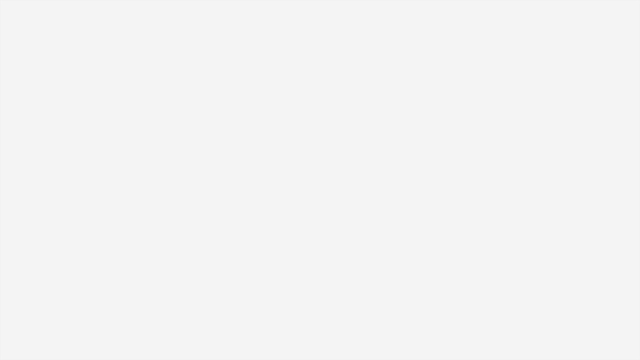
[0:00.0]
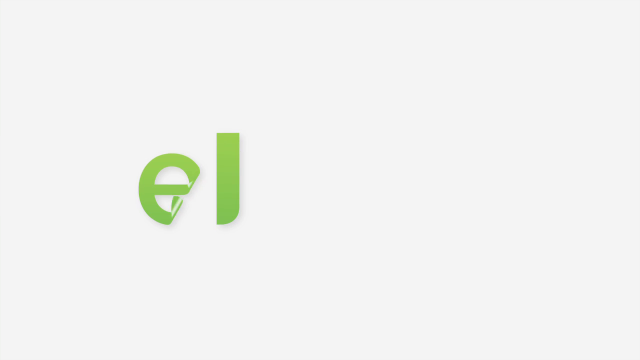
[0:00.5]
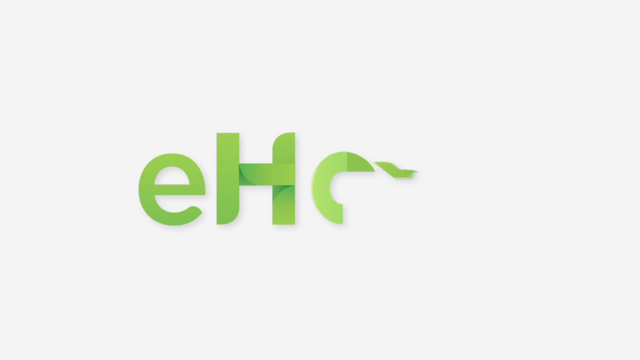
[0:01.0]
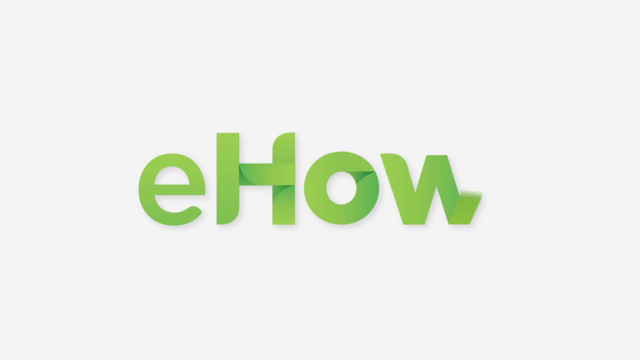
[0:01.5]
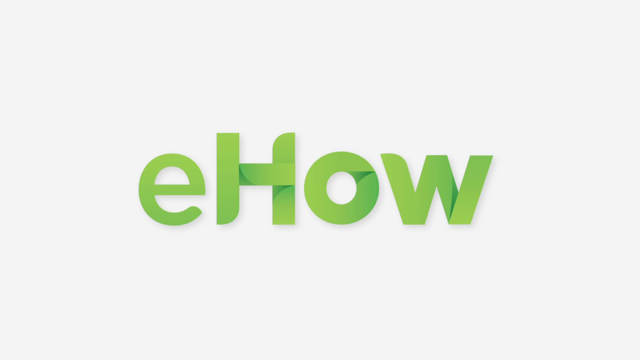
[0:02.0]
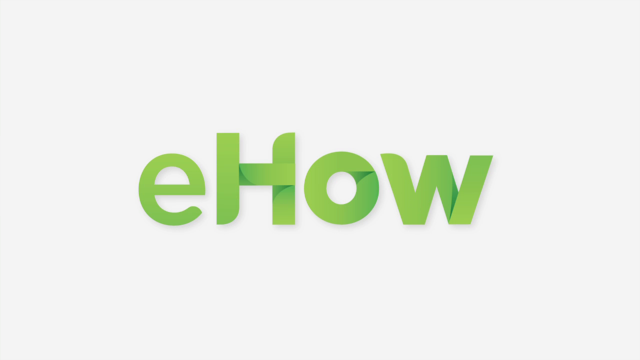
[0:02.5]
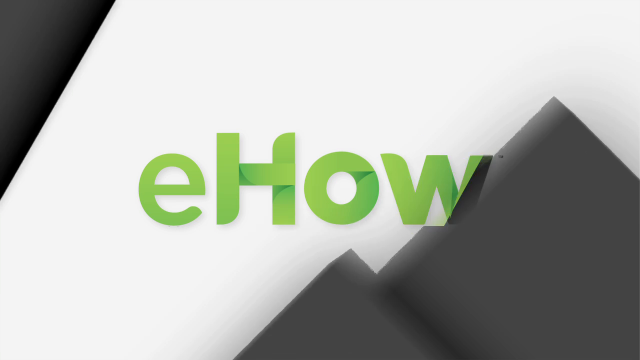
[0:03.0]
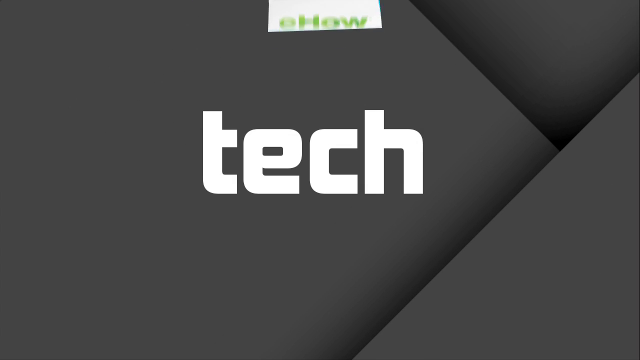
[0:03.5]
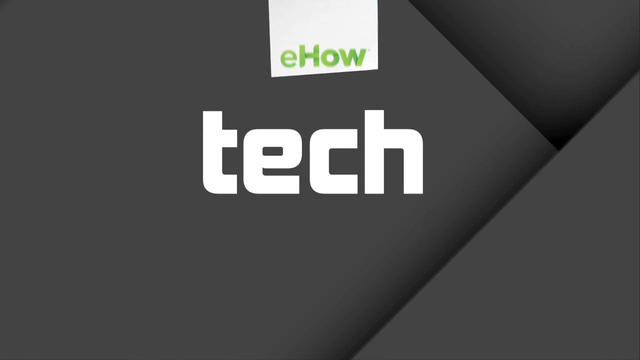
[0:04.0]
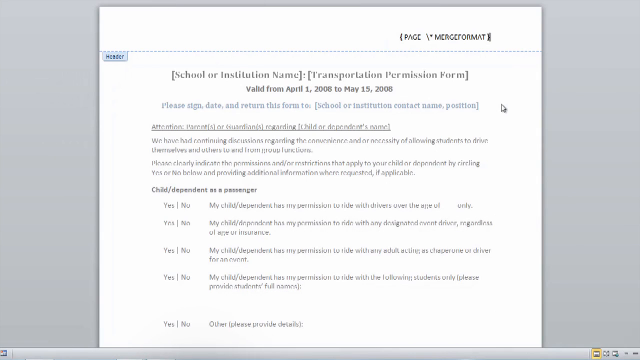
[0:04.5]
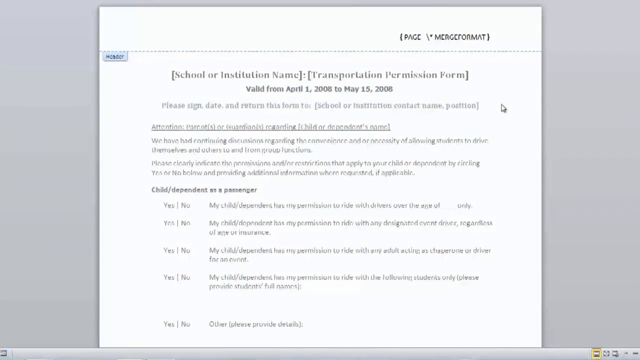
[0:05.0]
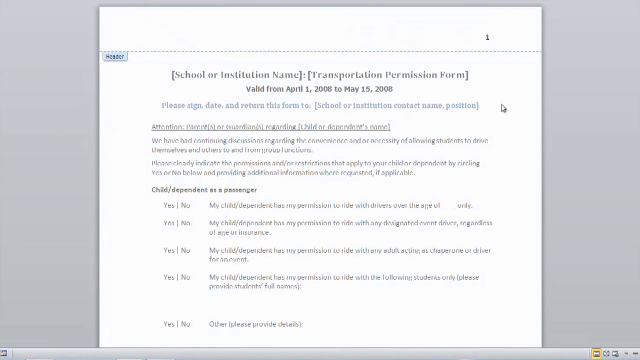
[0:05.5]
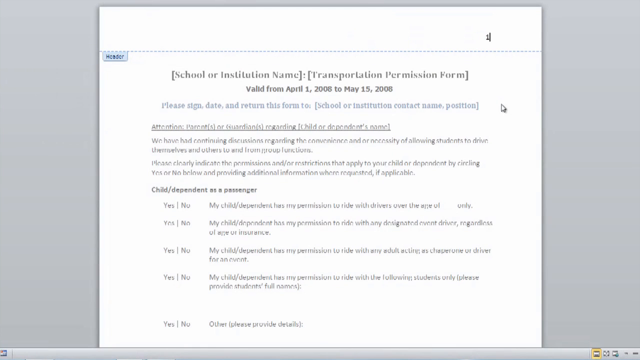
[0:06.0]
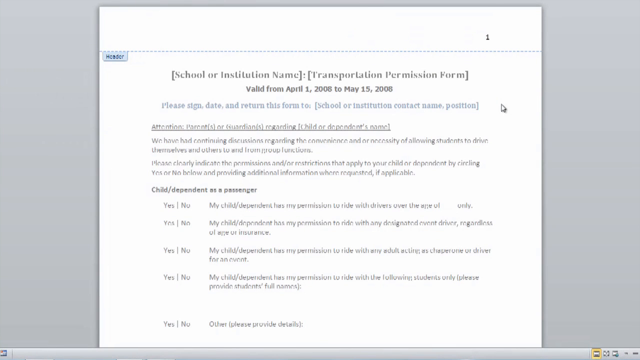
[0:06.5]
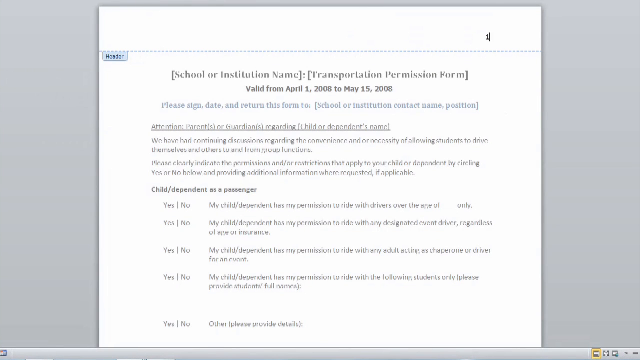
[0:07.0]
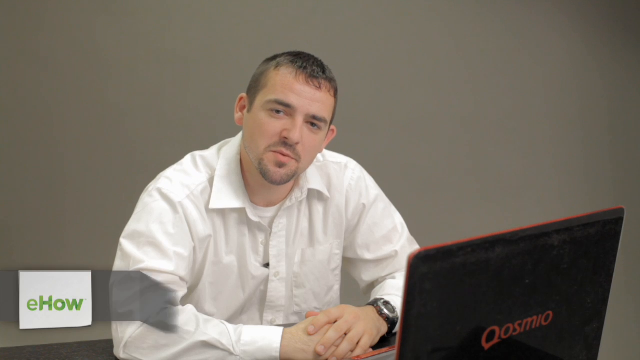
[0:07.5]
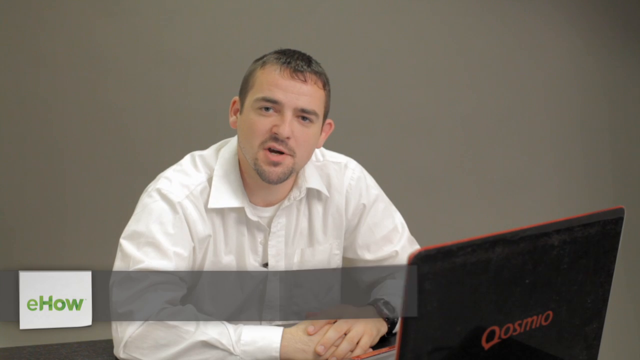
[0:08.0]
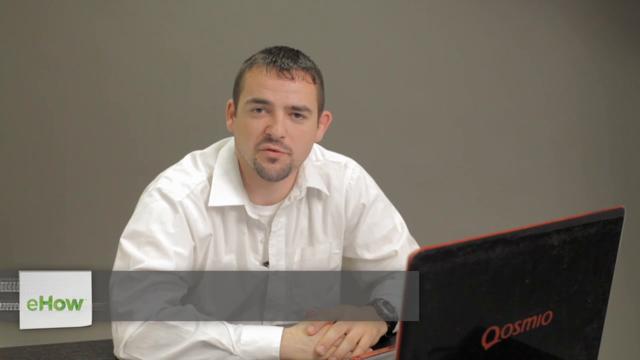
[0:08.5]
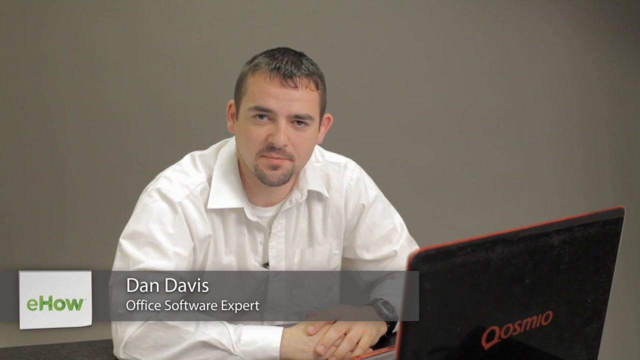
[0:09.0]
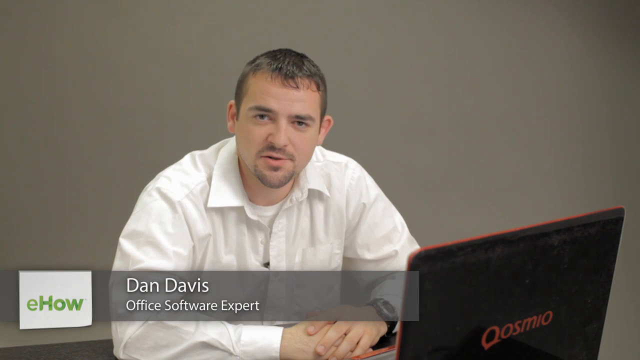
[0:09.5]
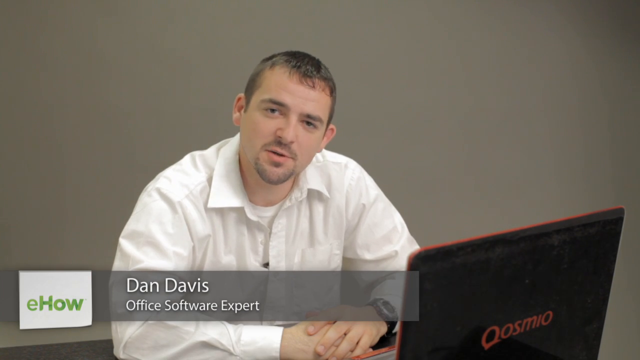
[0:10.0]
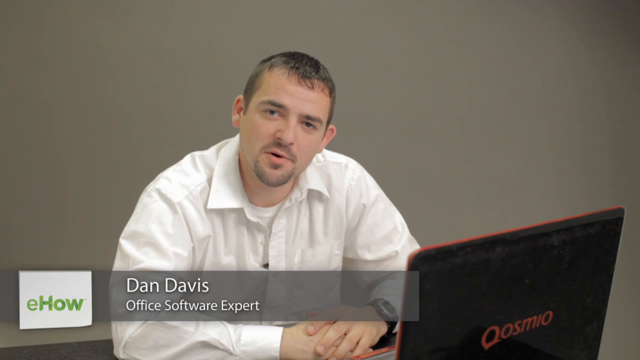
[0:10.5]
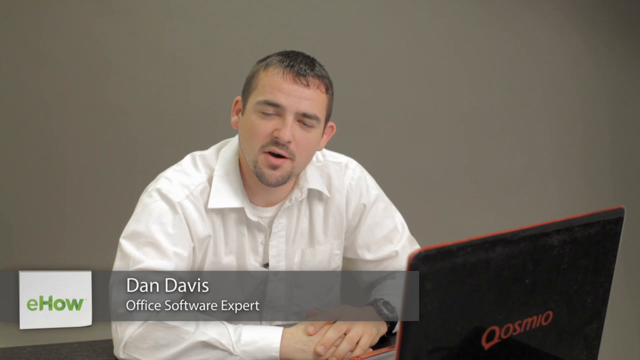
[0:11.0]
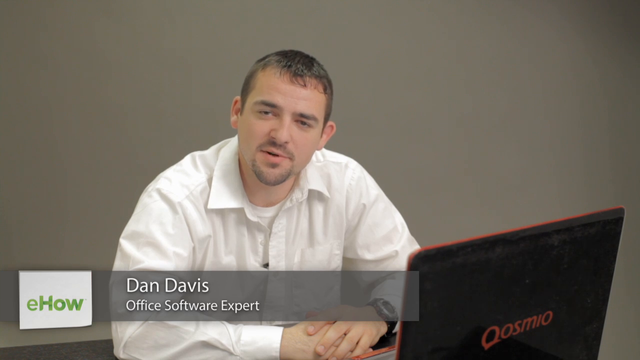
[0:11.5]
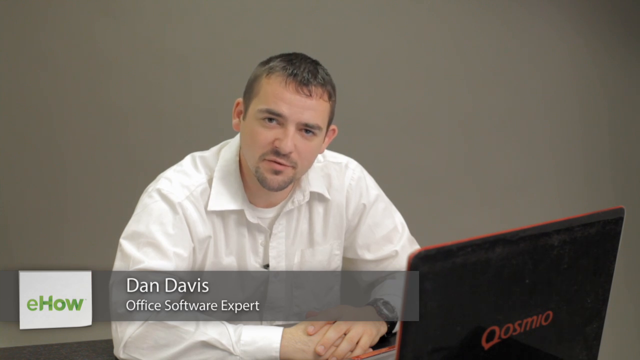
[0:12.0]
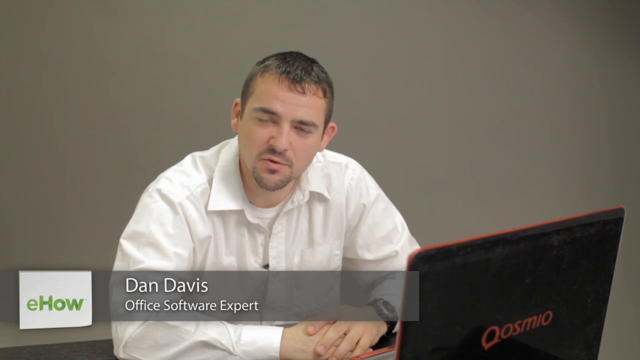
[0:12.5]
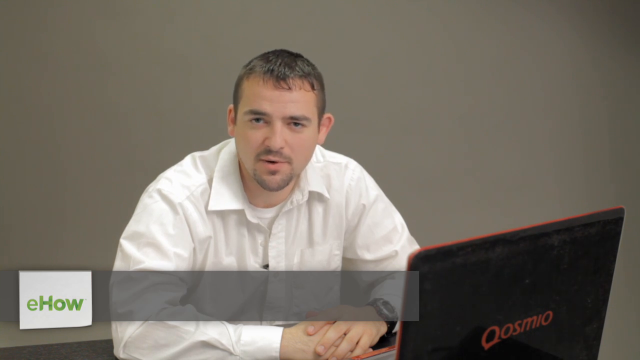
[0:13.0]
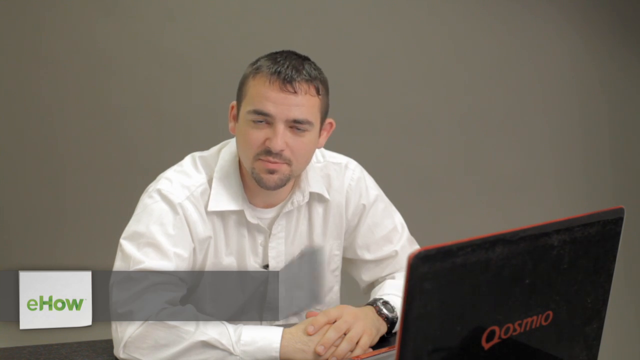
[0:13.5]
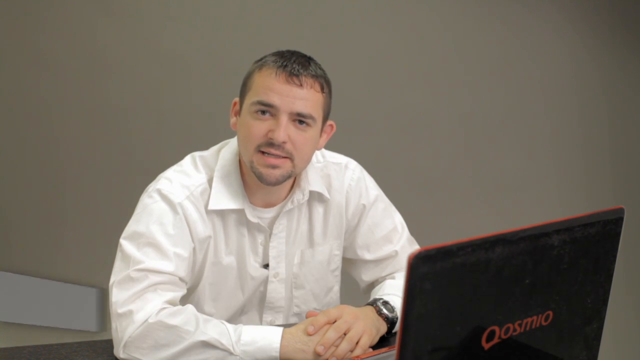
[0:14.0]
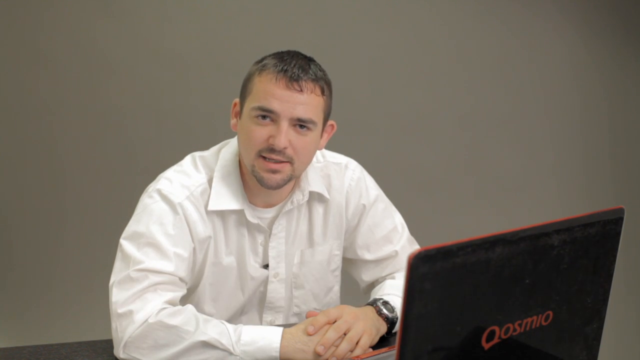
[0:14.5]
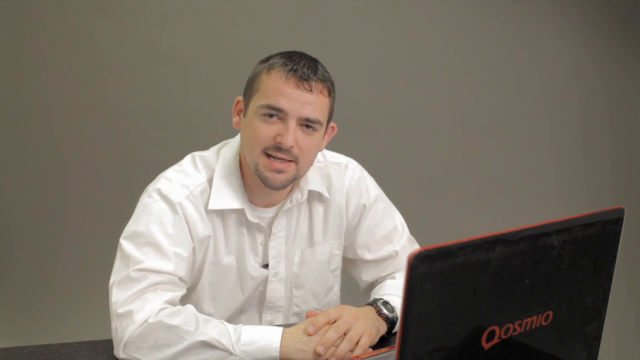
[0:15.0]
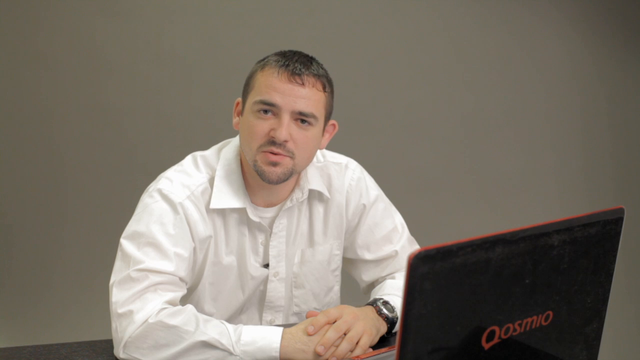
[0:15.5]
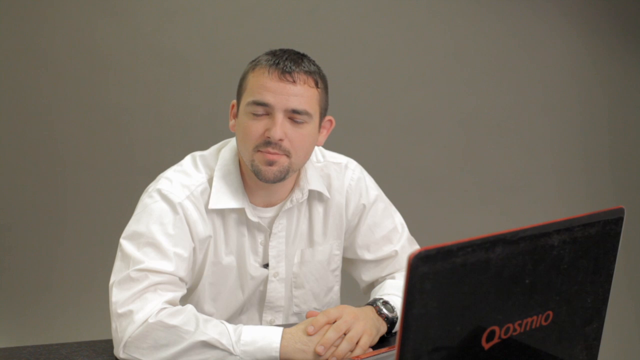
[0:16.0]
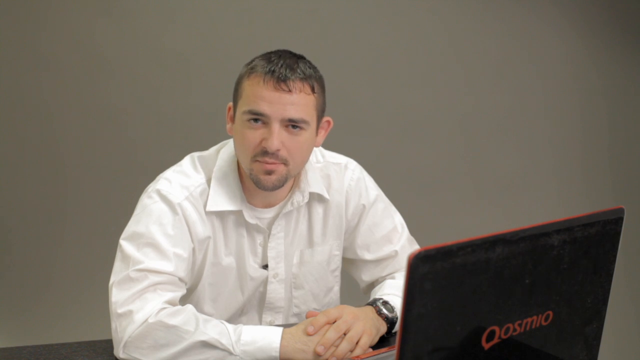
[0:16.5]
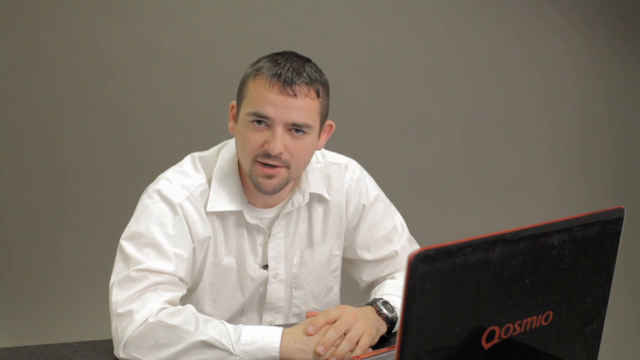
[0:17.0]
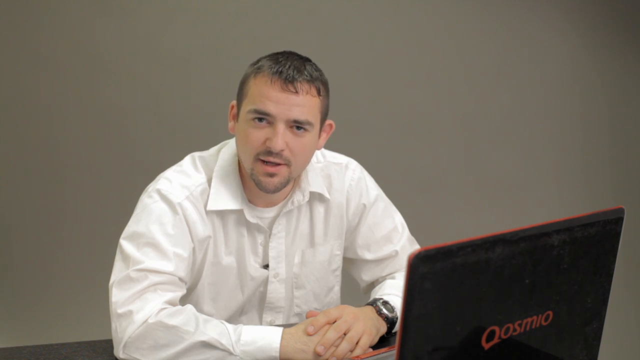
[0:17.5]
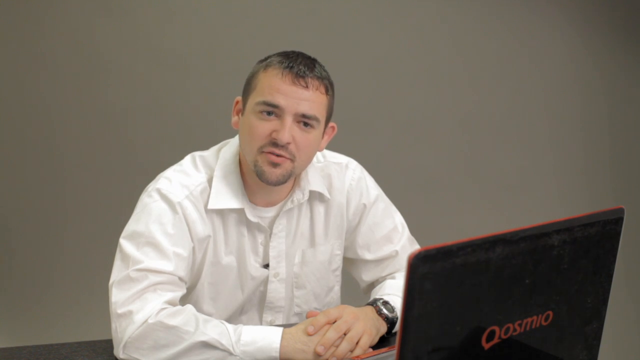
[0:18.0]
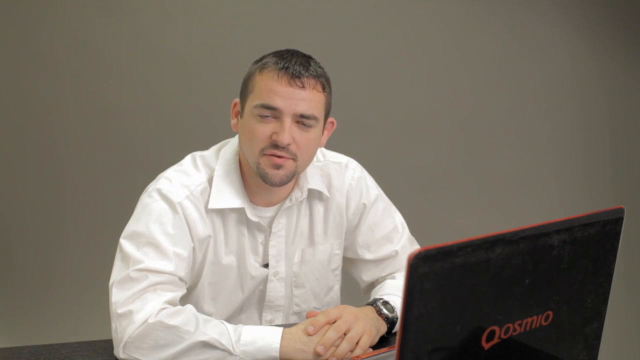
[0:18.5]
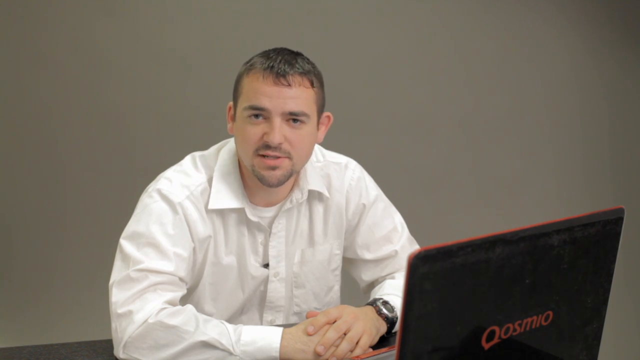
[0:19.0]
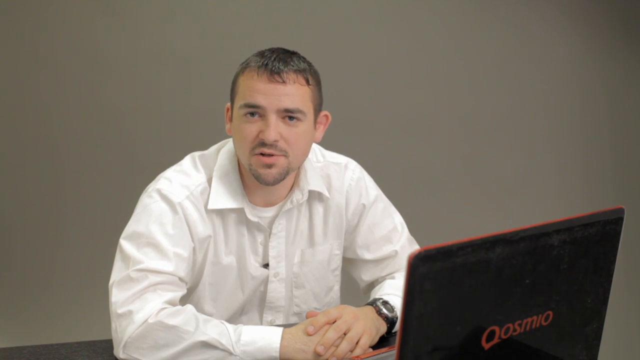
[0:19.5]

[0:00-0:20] The letters E-H-O-W appear one at a time in a green graphic font. The display then changes to a black background with triangular graphic elements that are sort of shaded, giving the triangle pieces a sense of depth. Large white block letters read "TECH", and on top of that is a white polygon shape that almost looks like a rectangle but is not quite one, where the eHow logo is shown. Next comes some sort of template for what looks like a permission form in a Word document. The cursor is in the header at the top right-hand corner, and the number 1 is typed in. The video then shows the man controlling the computer: he wears a white long-sleeved button-up shirt with a white shirt underneath and sits at a table in front of a laptop, his hands folded and resting on the table, his left hand appearing to be on top of his right. He is Dan Davis, some kind of office software expert, and he talks to the camera.